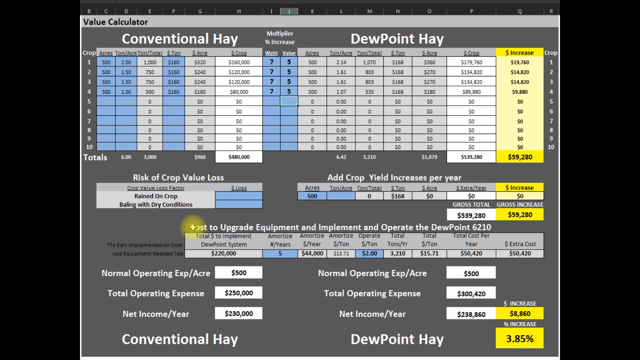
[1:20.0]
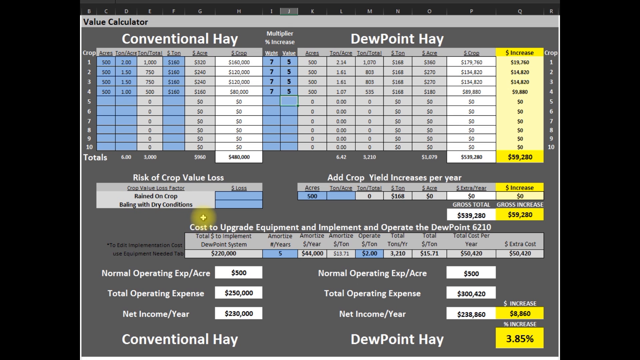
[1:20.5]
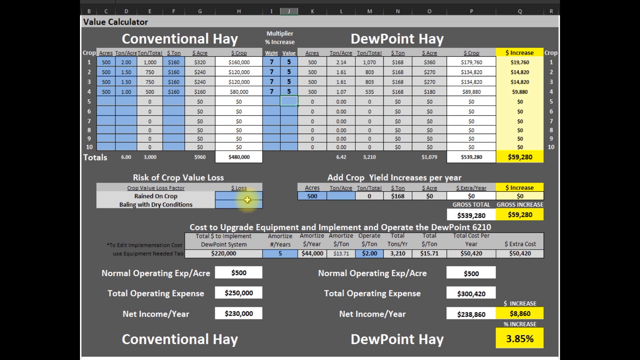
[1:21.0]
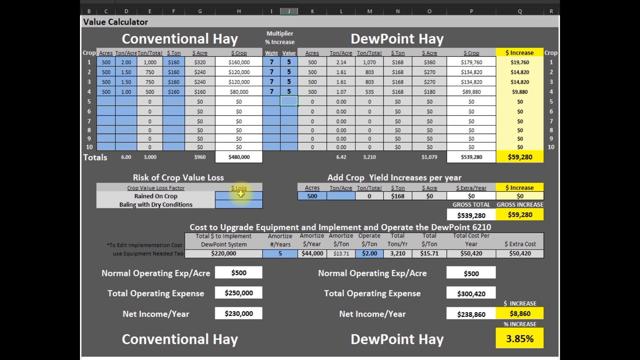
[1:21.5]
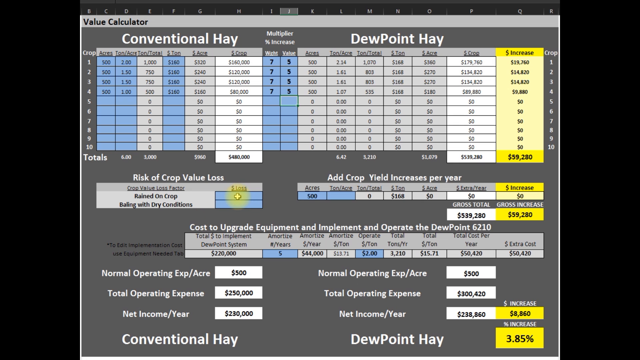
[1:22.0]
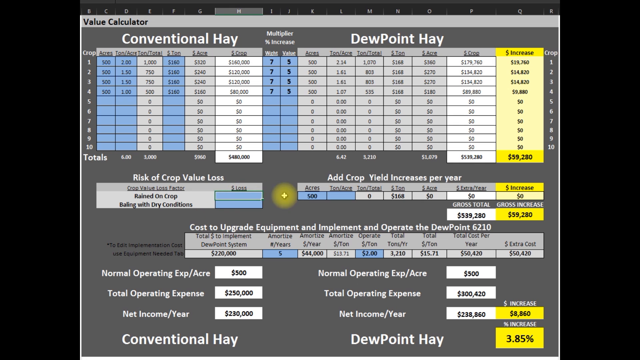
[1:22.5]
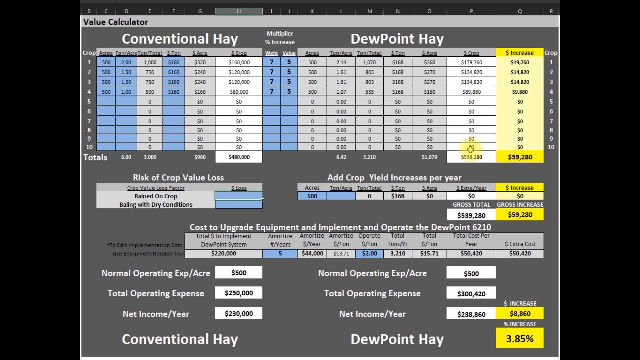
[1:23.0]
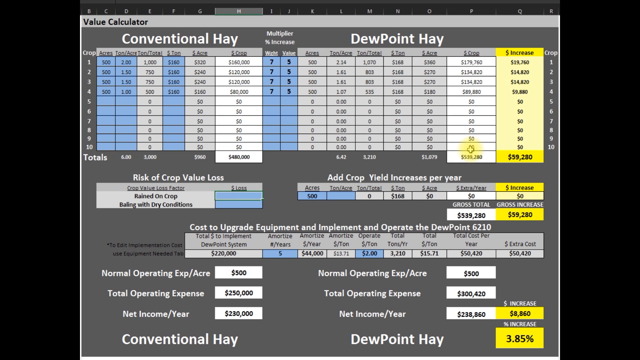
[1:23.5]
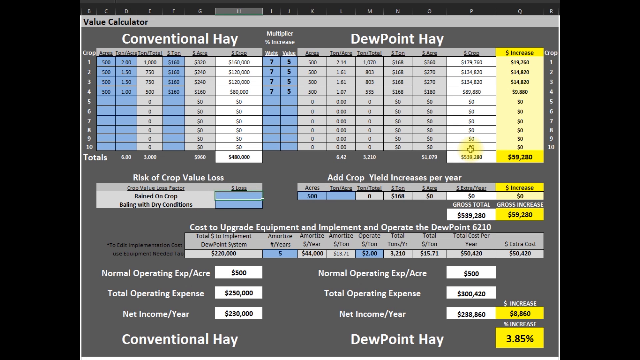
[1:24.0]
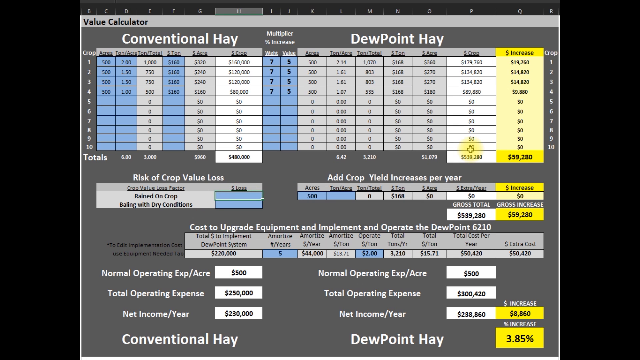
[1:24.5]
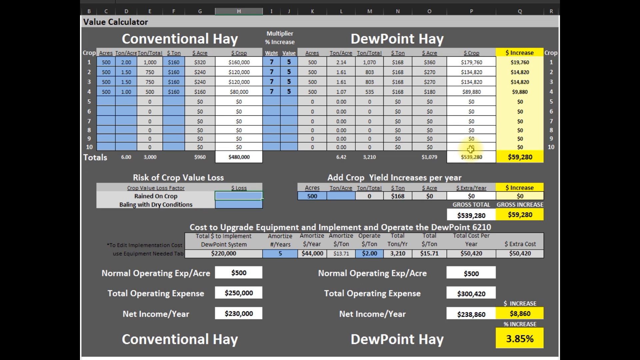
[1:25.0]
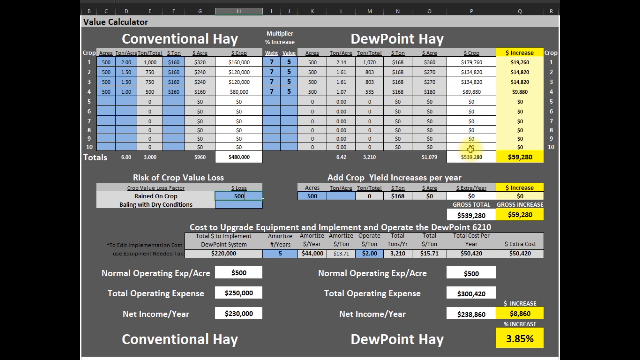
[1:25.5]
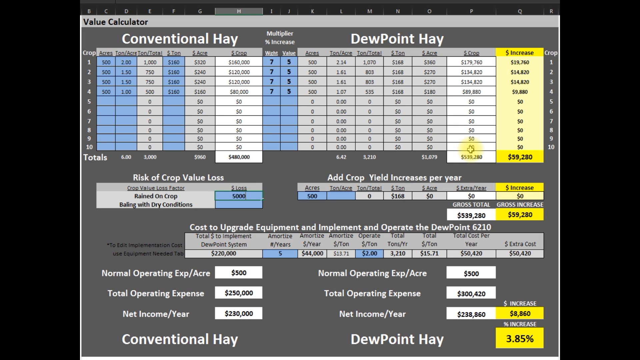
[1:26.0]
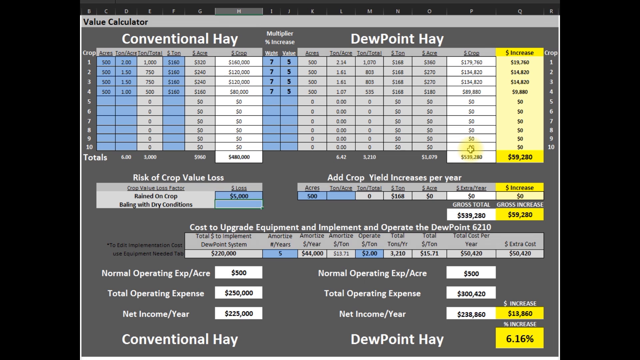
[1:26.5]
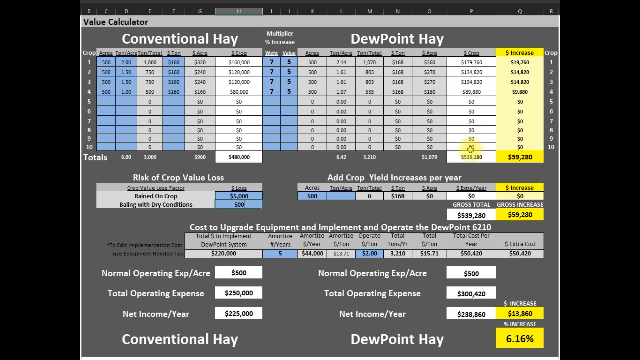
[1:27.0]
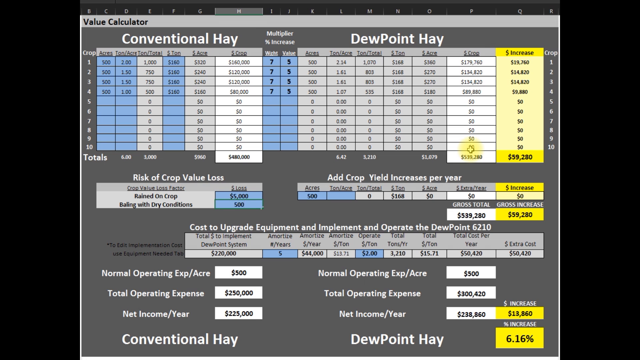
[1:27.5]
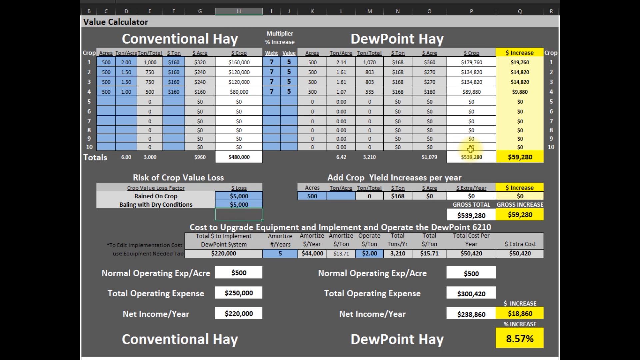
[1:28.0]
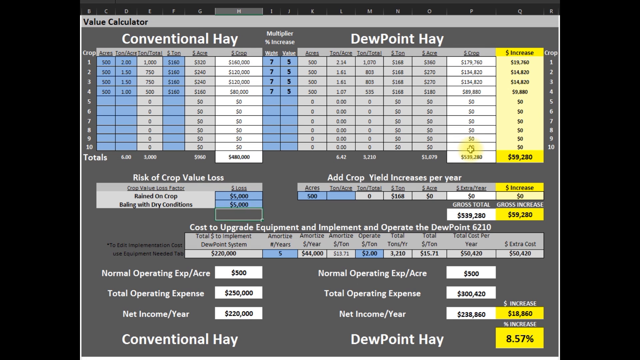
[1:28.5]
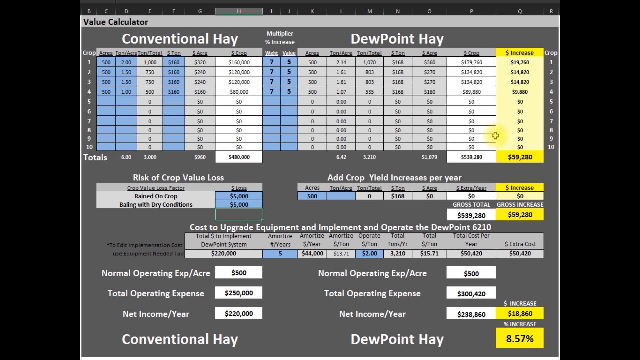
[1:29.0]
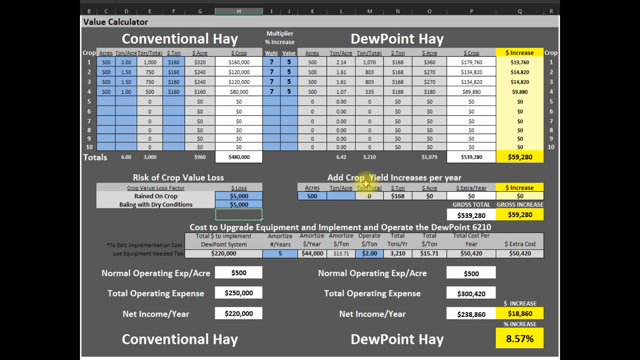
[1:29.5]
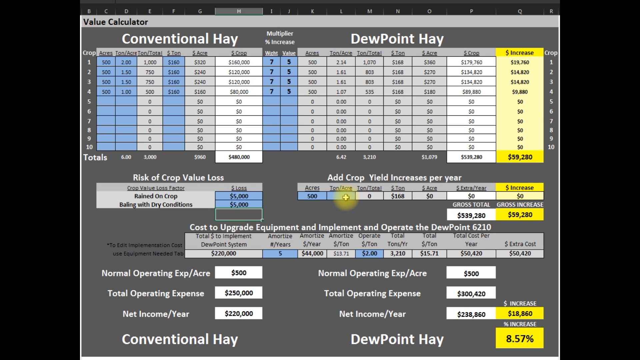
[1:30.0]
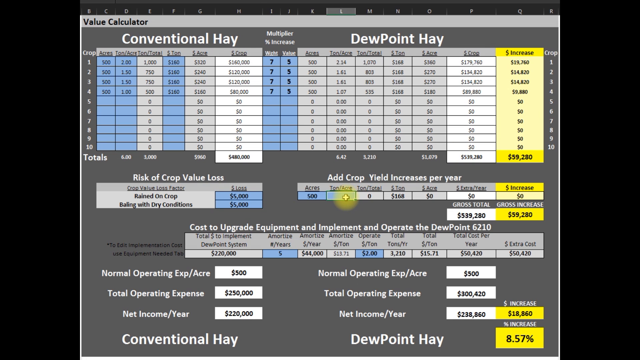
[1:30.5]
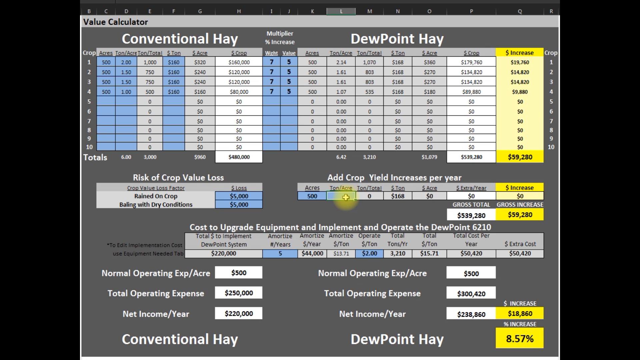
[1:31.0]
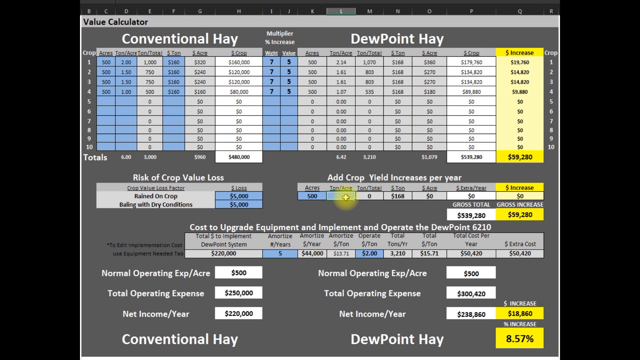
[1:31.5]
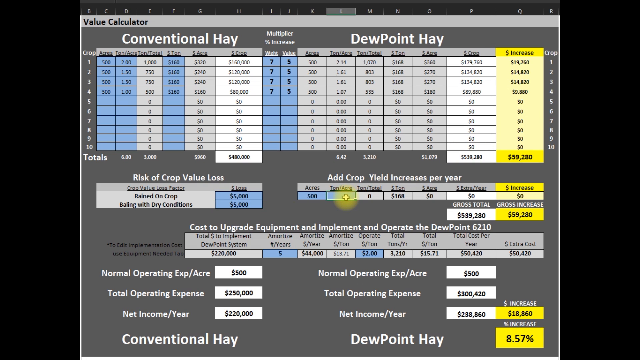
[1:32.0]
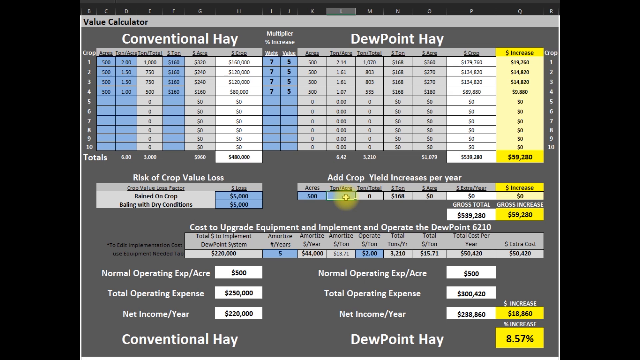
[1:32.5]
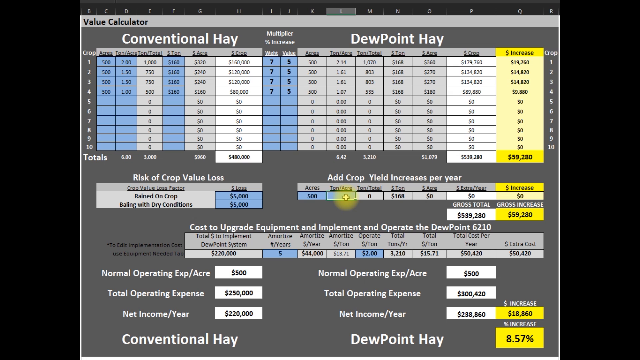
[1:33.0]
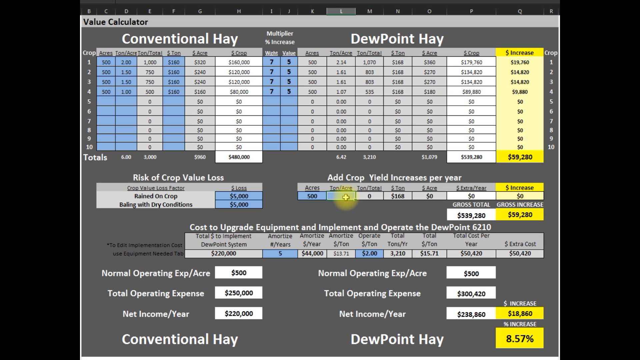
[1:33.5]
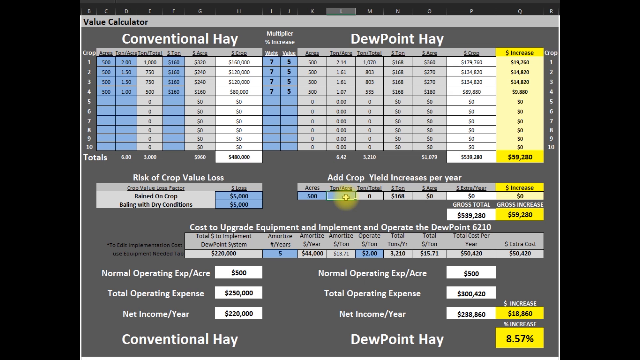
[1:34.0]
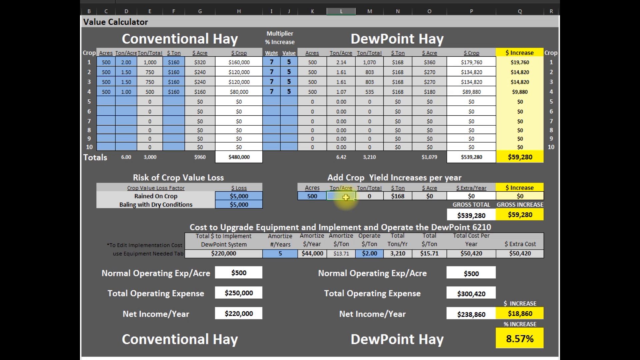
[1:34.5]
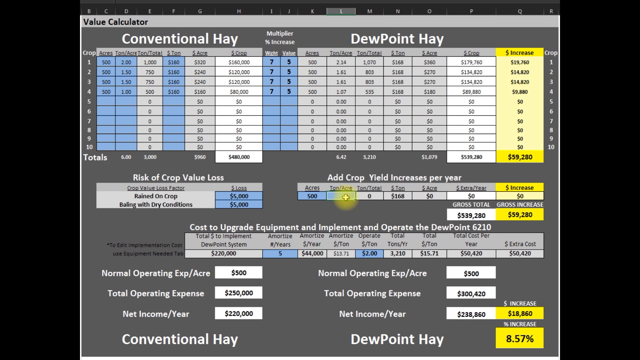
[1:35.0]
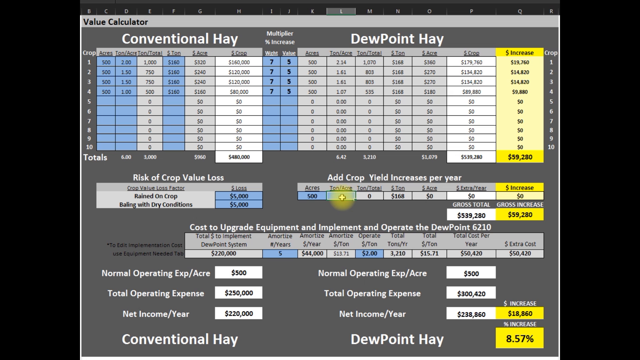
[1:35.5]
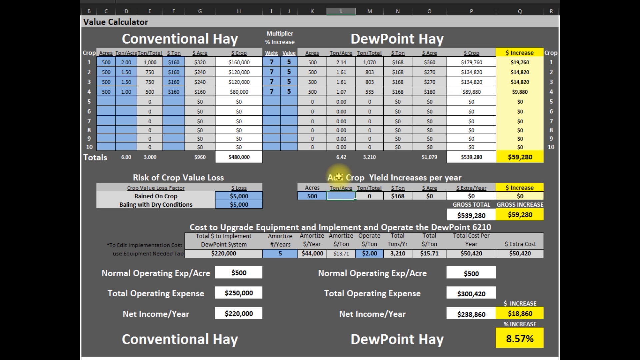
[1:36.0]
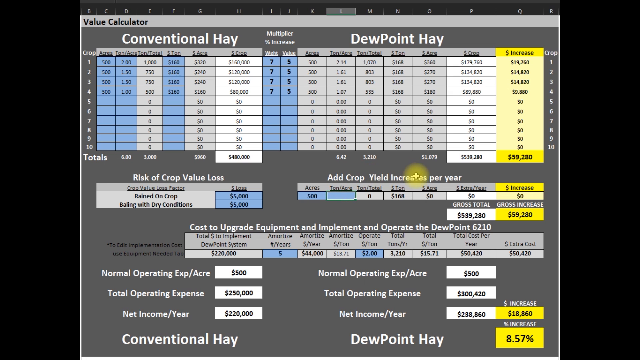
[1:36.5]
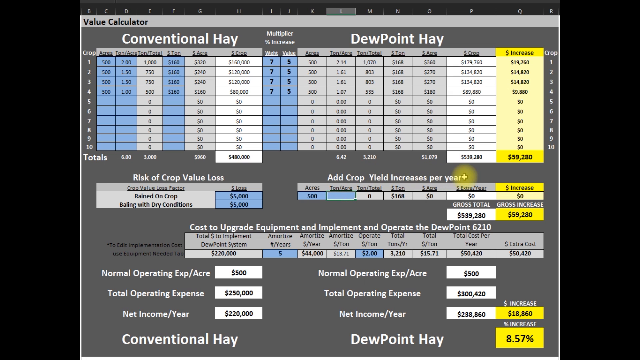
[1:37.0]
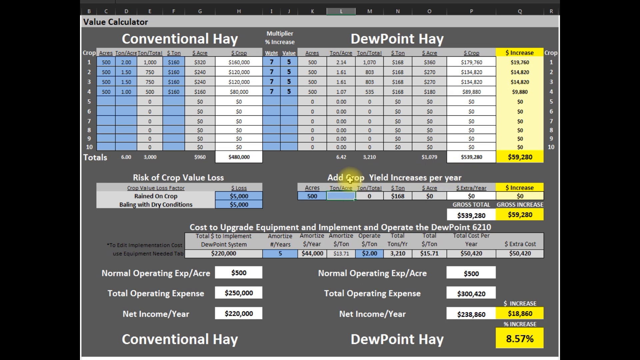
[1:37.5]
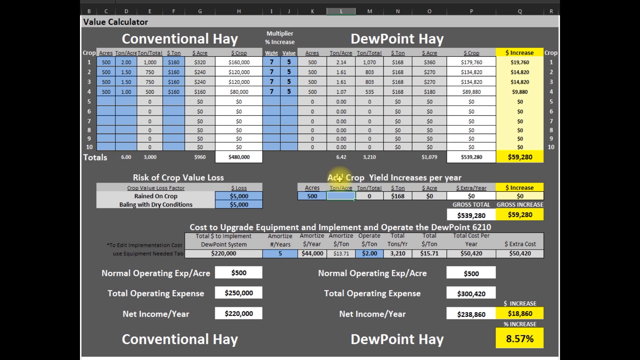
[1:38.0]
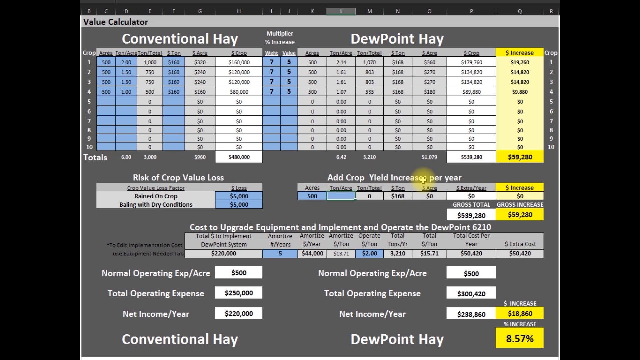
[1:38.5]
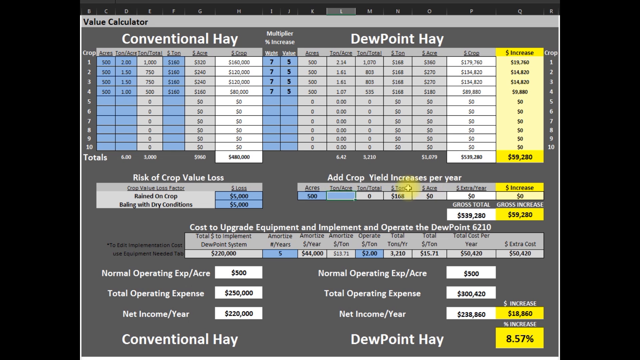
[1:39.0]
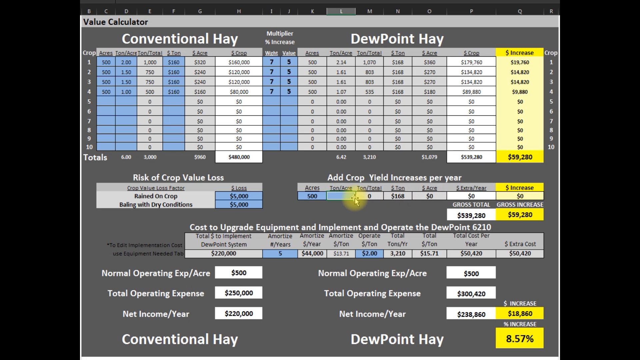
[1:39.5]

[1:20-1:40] The sheet resembles Excel but shows no green at all. The title "value calculator" is in the upper left-hand corner. The columns are labeled by letters across the top, B through R, with no A visible. The person appears to be in column J, then moves around, and it looks like they are in column M, where they type something in the area labeled "risk of crop value loss". It looks like they type 5,000 for each entry, though it is hard to tell whether there is a dollar sign or another number. When they do this, other numbers change in other parts of the sheet. The person then moves into the "add crop yield increases per year" section.